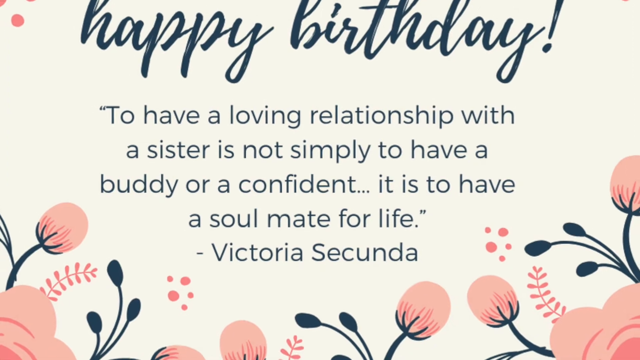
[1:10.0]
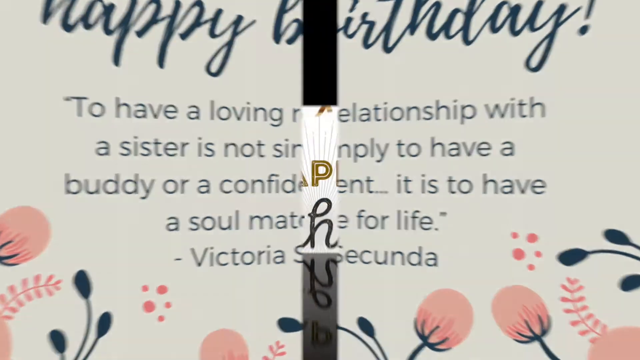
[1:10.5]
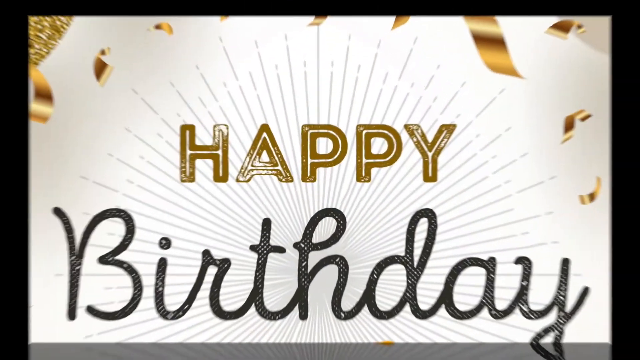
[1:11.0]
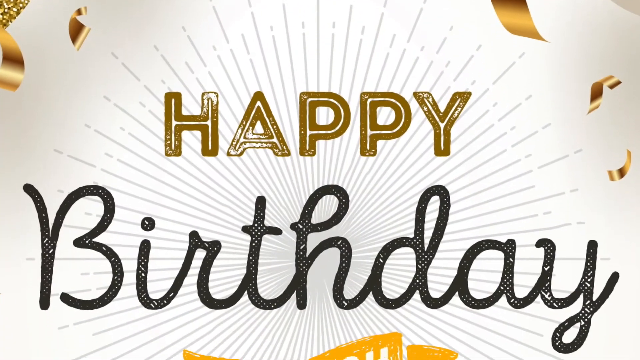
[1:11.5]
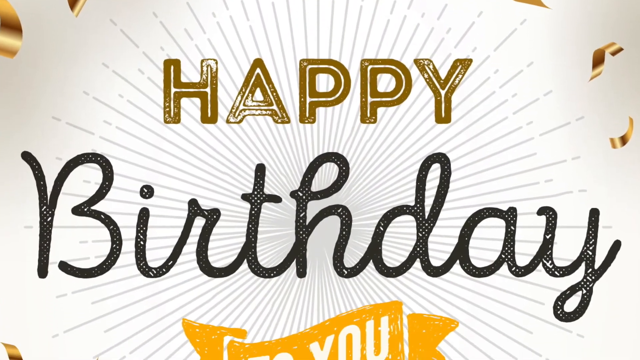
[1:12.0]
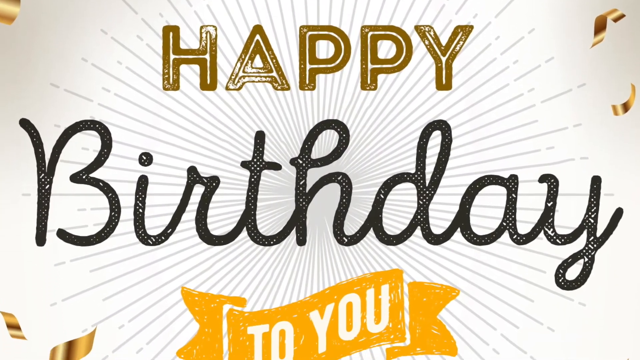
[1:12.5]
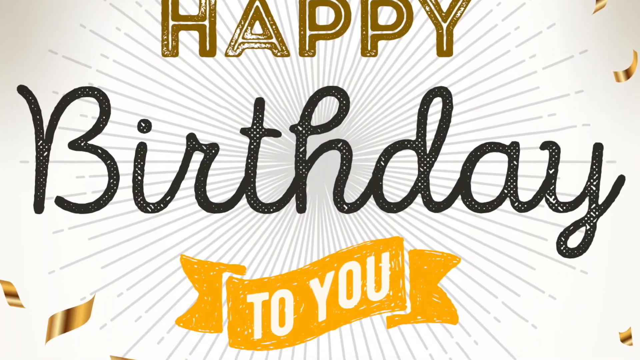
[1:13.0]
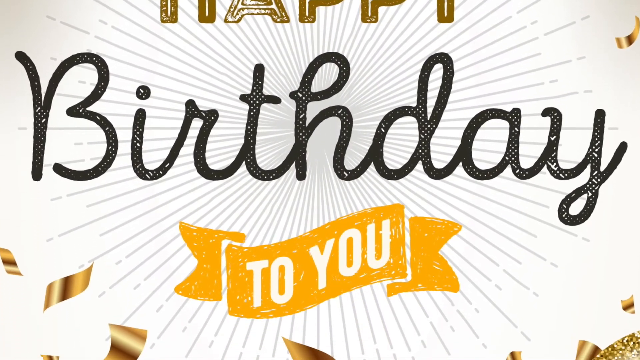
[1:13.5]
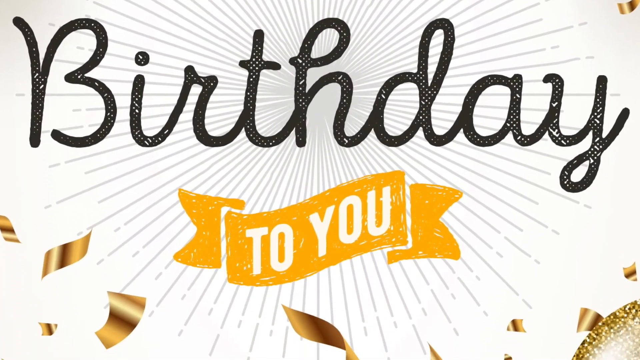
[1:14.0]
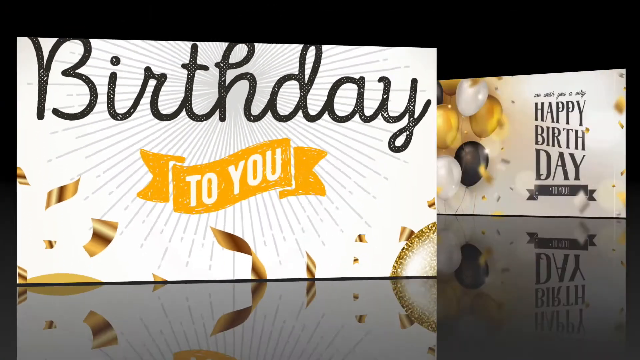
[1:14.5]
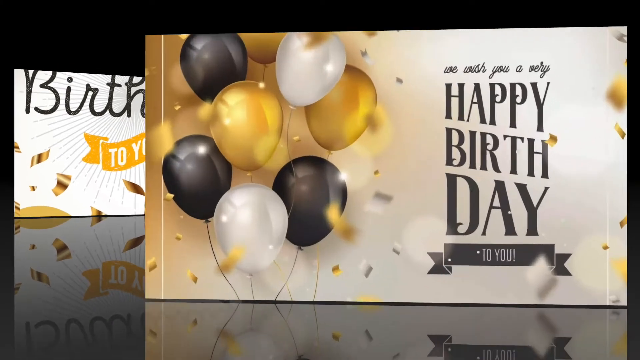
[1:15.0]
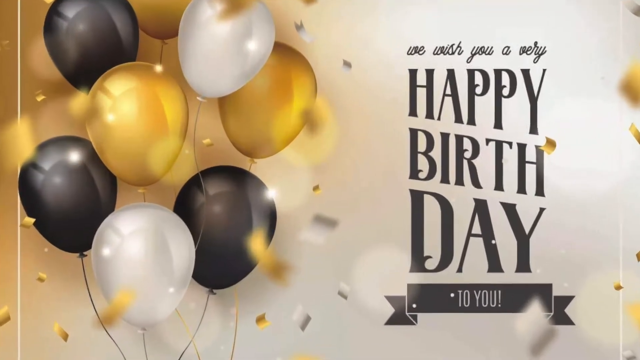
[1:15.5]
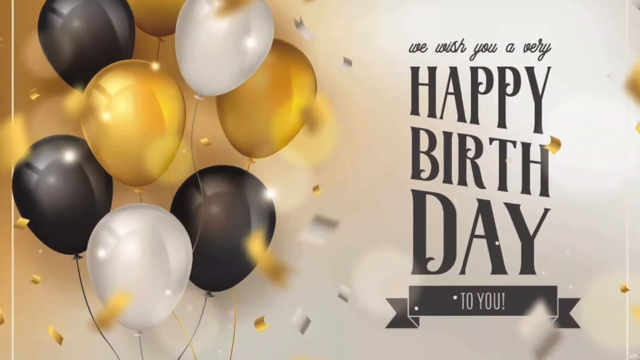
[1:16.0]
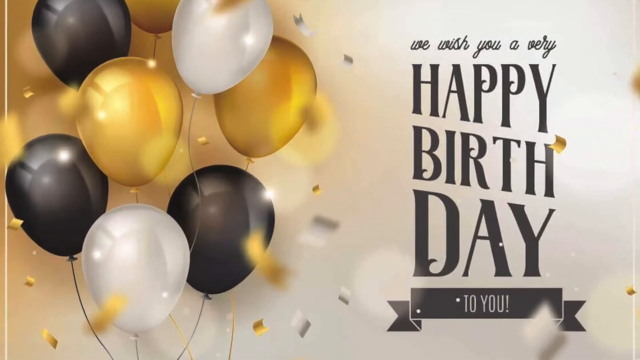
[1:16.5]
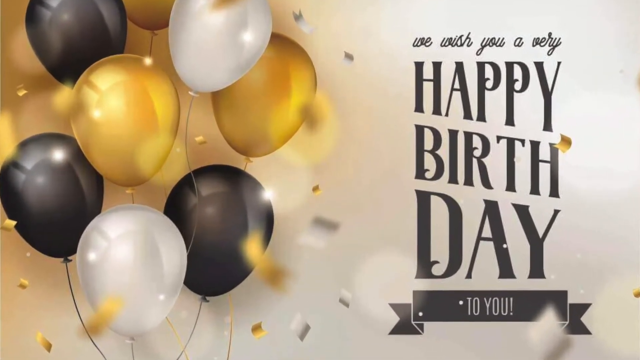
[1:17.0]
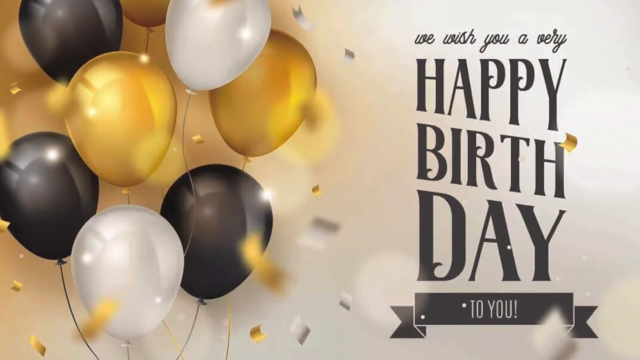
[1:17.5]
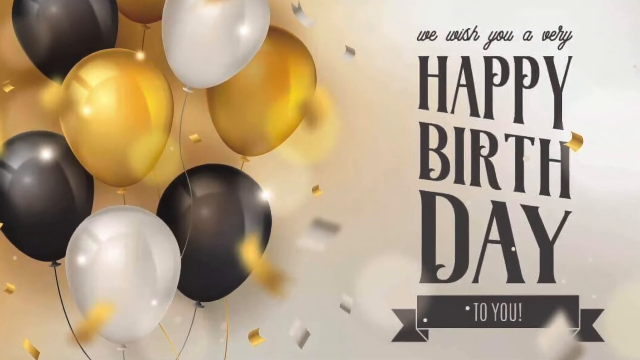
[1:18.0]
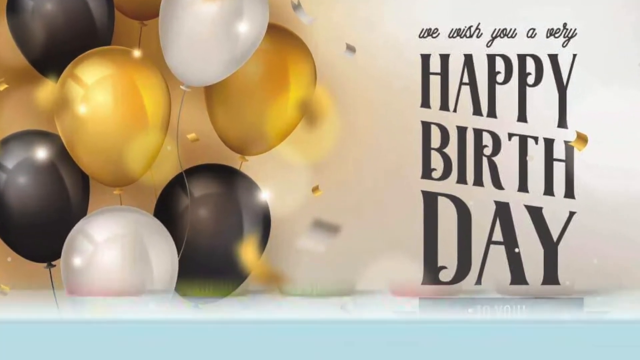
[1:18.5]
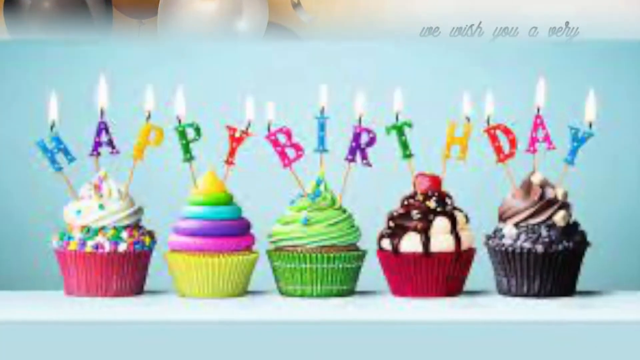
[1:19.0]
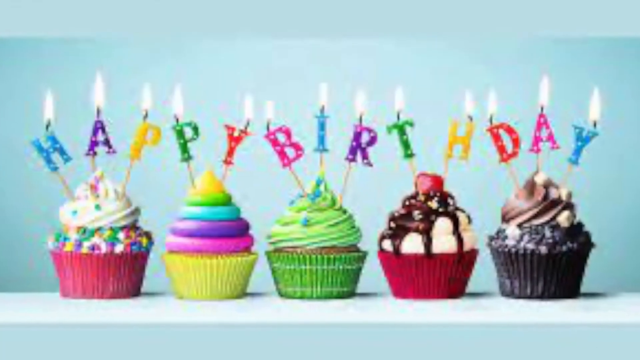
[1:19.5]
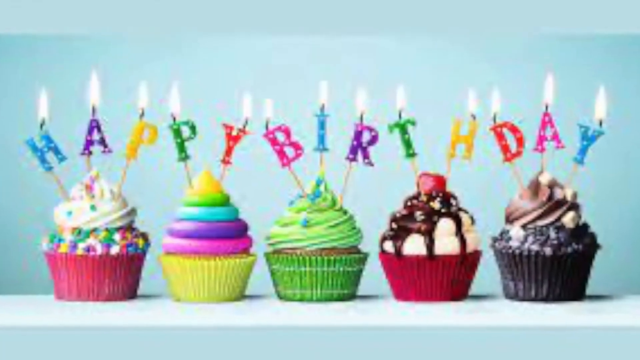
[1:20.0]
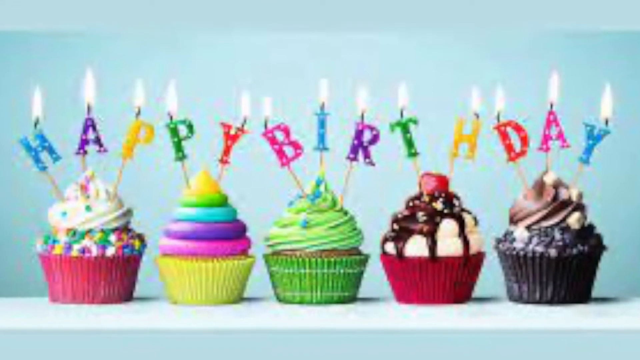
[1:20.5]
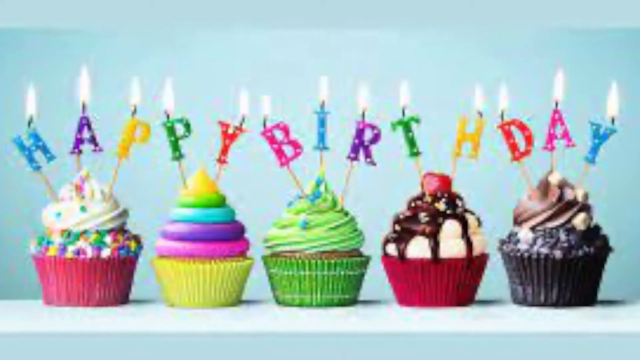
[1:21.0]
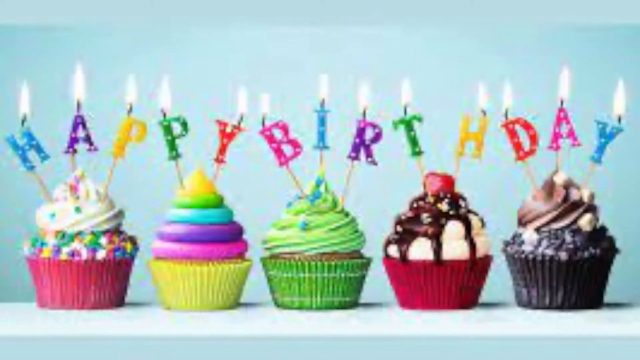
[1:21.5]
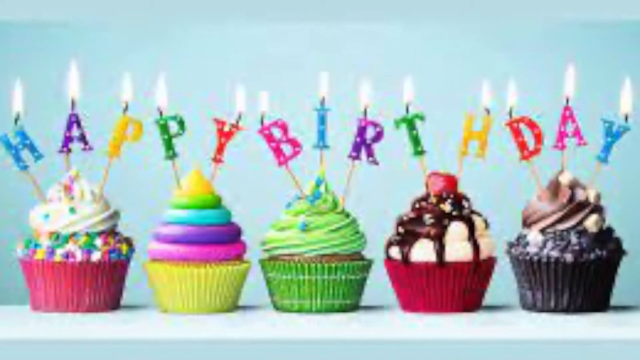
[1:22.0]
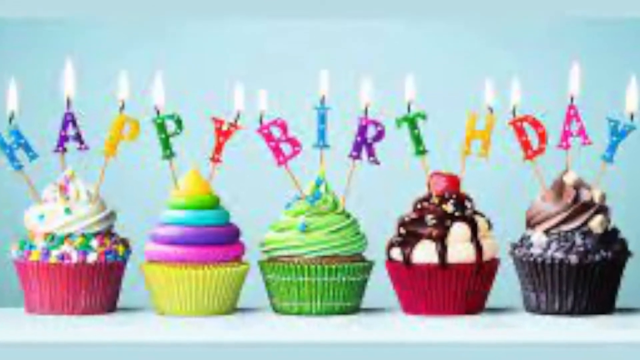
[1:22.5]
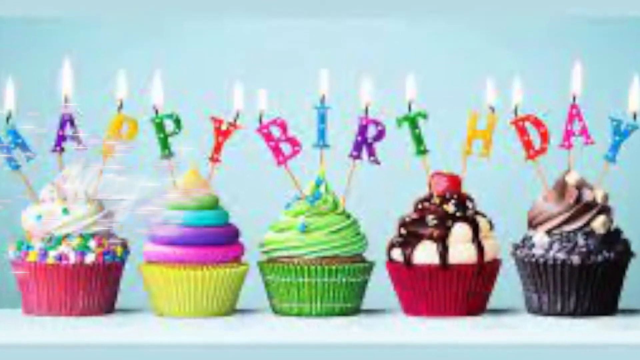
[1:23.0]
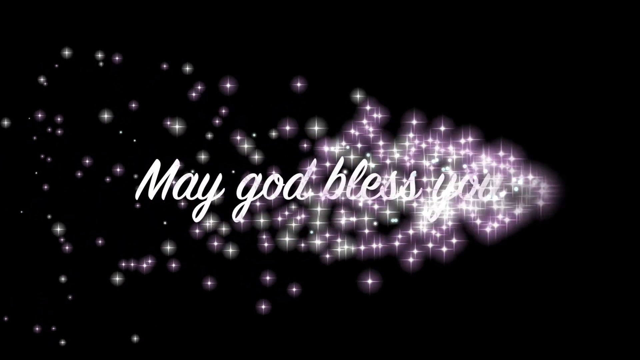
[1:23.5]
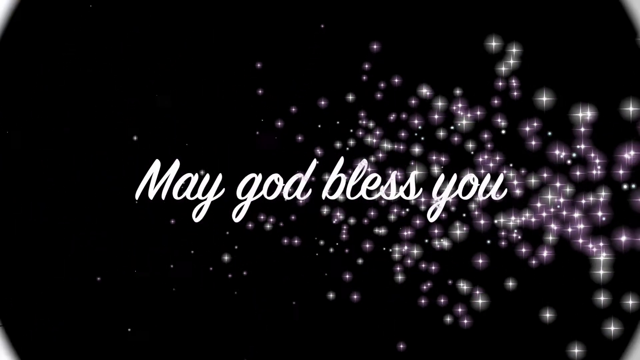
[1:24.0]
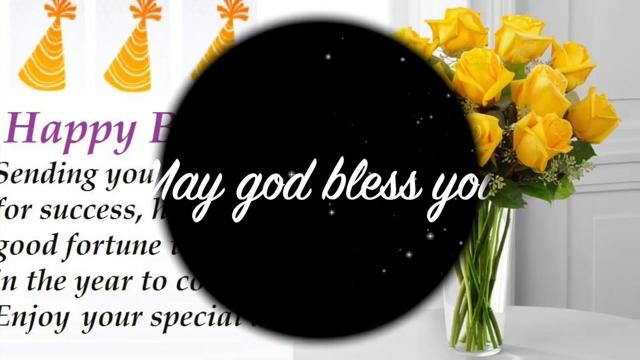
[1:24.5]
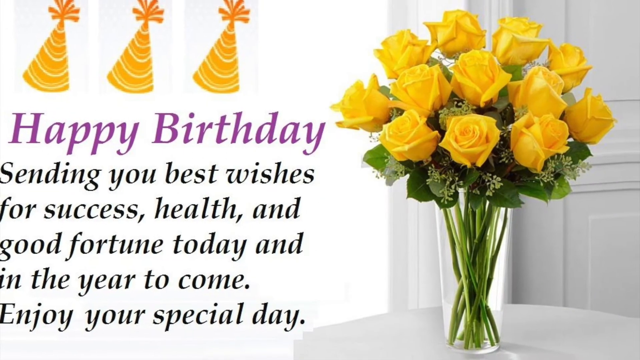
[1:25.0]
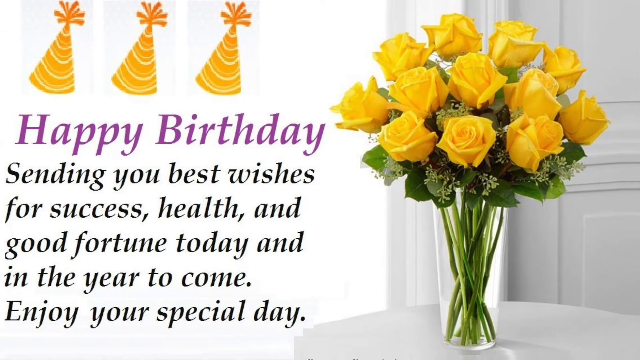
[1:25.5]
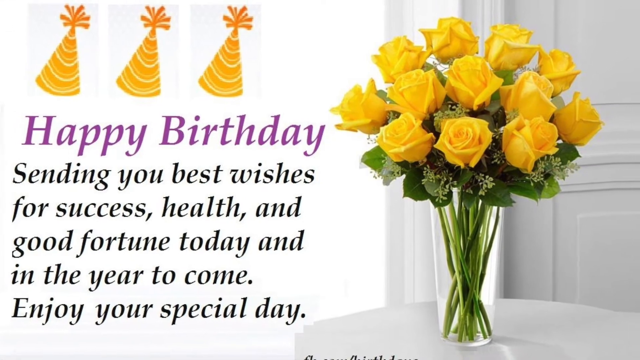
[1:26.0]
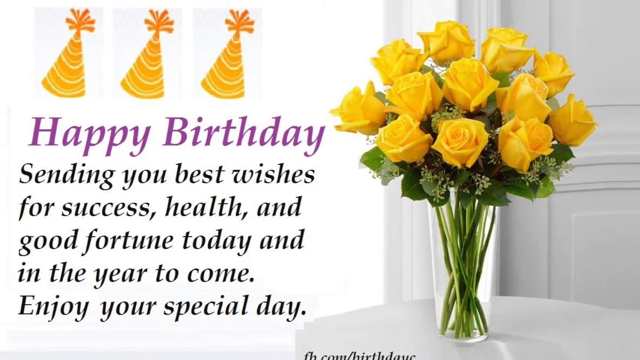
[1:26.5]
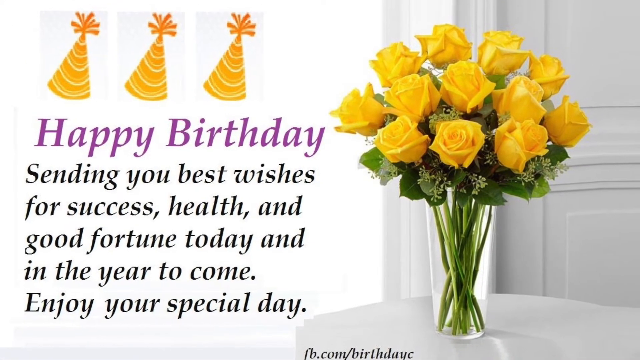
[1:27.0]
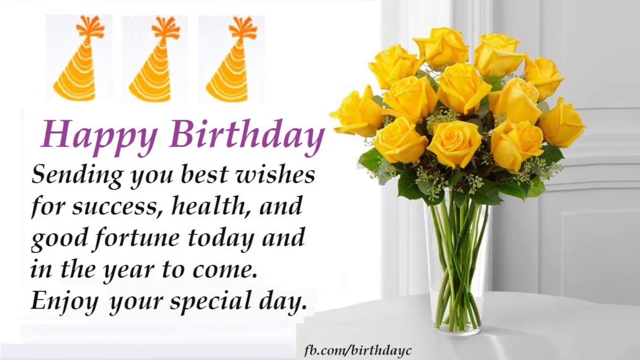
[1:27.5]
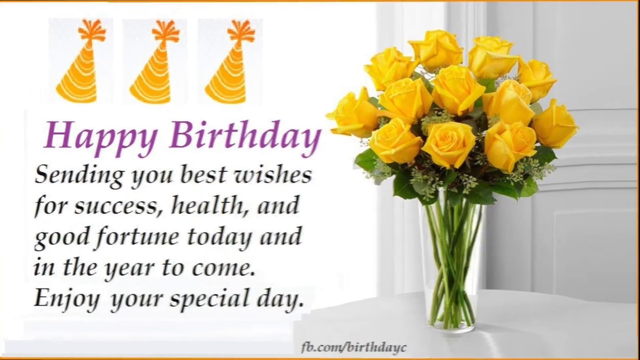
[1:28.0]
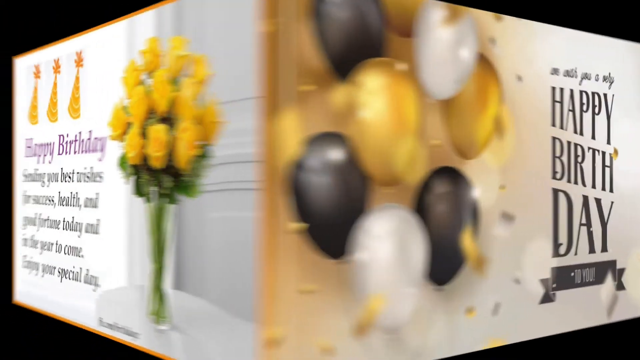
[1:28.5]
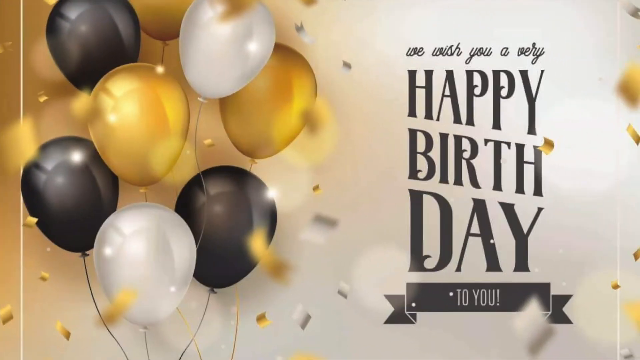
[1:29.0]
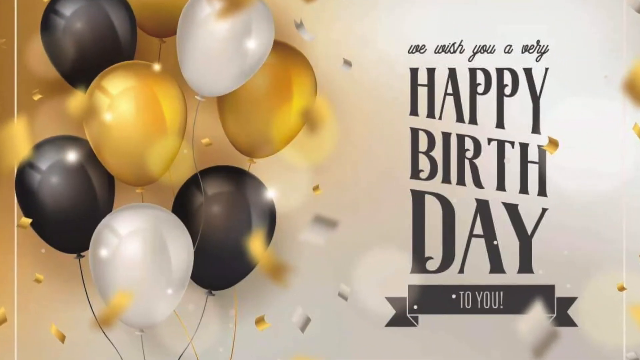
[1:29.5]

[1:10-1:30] The card with the quote about a relationship with a sister, by Victoria Secunda, splits open vertically down the middle and pans away to reveal another birthday card with stylized confetti. It says "happy" in a gold font with hollow letters, "birthday" beneath that in a black, handwritten-style comic cursive font, and "to you" in yet another font on a gold banner; behind it is what looks like a stylized explosion, apparently the confetti exploding outward. The view pulls back onto a black background with a reflective surface, pulls to the left, and then to the right shows another card that says "happy birthday," with "birth" and "day" split into separate words, and gold, white and black balloons on the left side of the frame. As it pulls in, smaller text above "happy birthday" reads "we wish you a very," and a banner beneath says "to you"; the card is very busy. The view sweeps in on it, then cuts away, moving from the bottom of the screen to the top, to another card that says "happy birthday" with each letter as an individual lit candle, set into different cupcakes with different frosting; one looks to be chocolate, and the rest look probably vanilla.